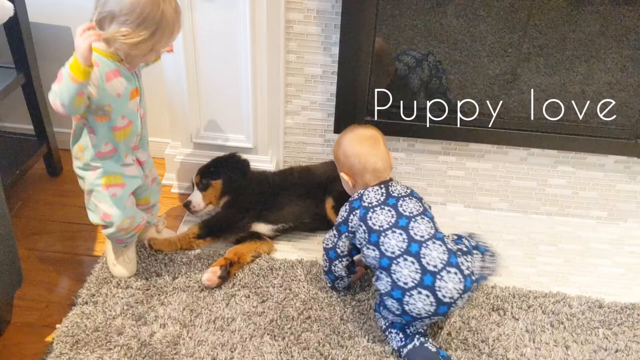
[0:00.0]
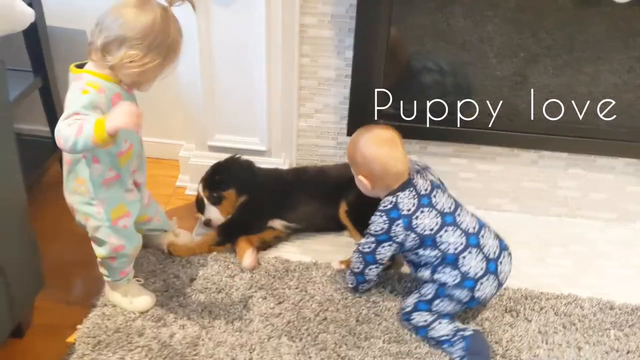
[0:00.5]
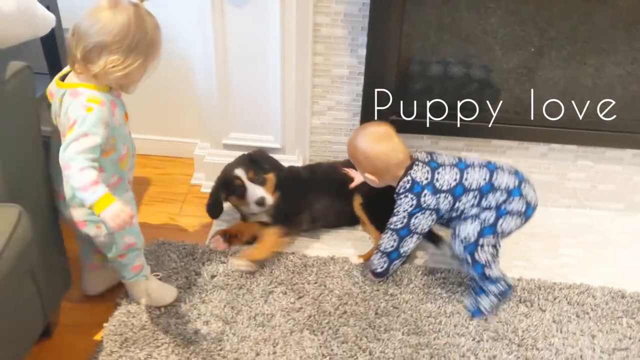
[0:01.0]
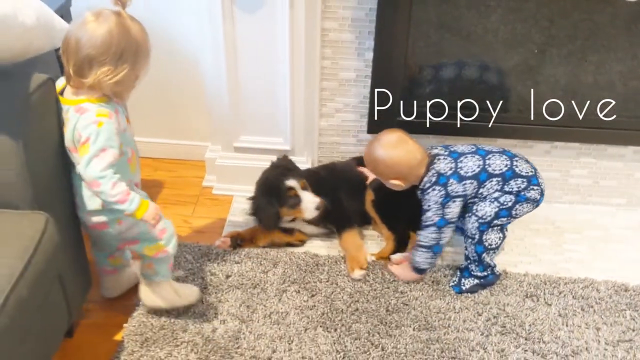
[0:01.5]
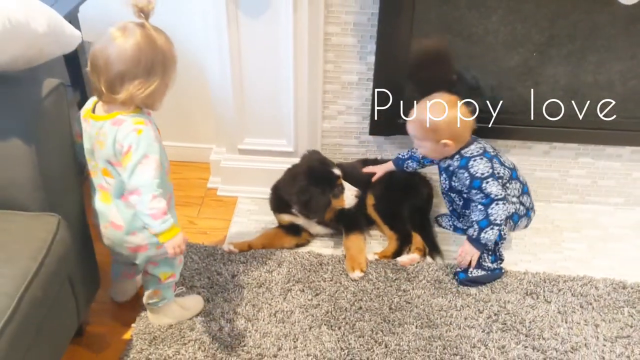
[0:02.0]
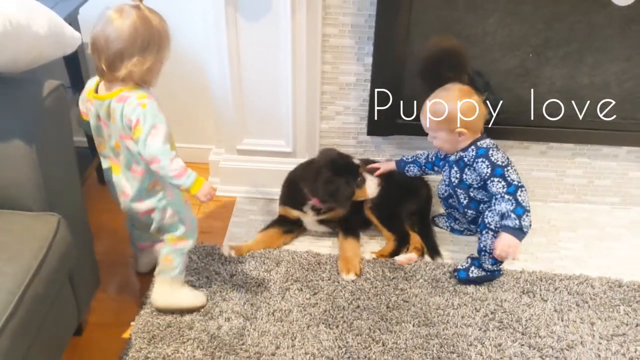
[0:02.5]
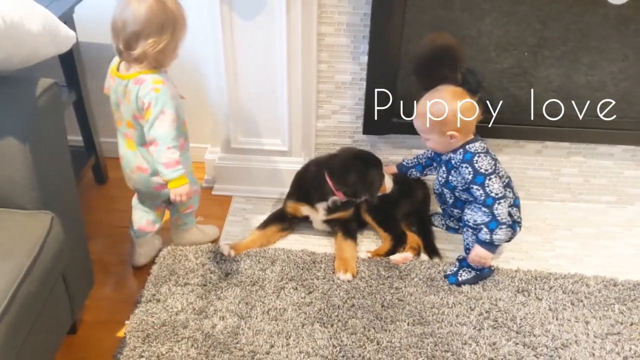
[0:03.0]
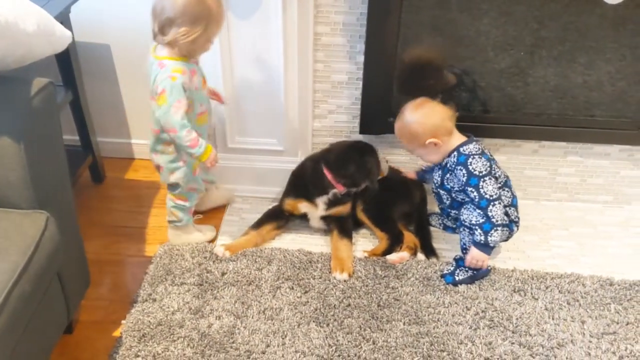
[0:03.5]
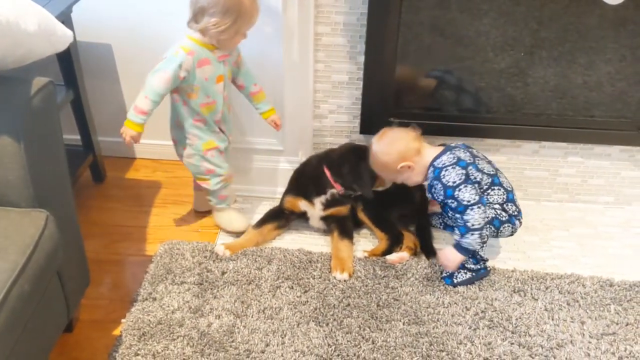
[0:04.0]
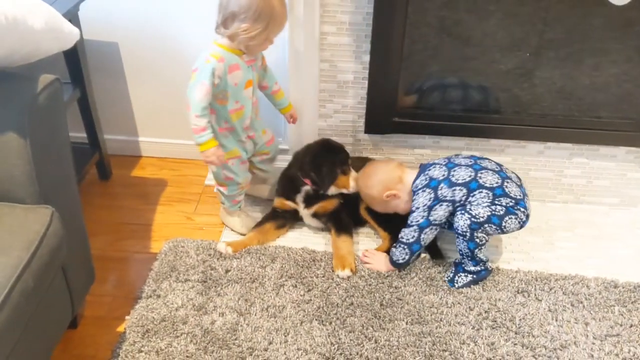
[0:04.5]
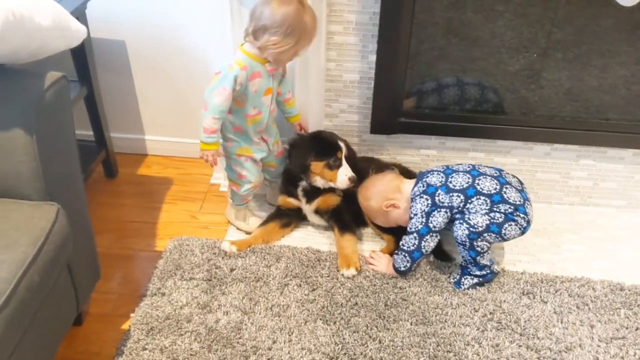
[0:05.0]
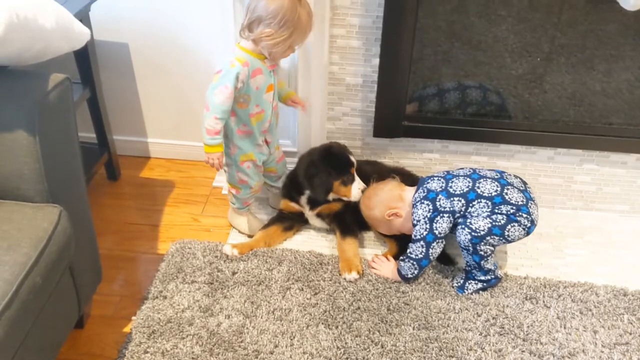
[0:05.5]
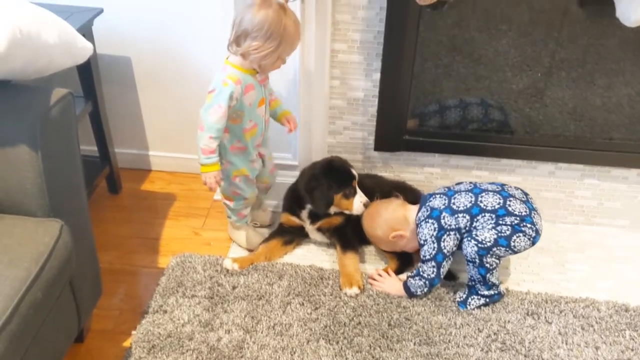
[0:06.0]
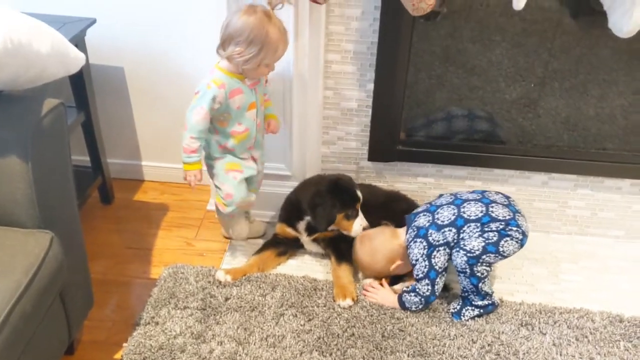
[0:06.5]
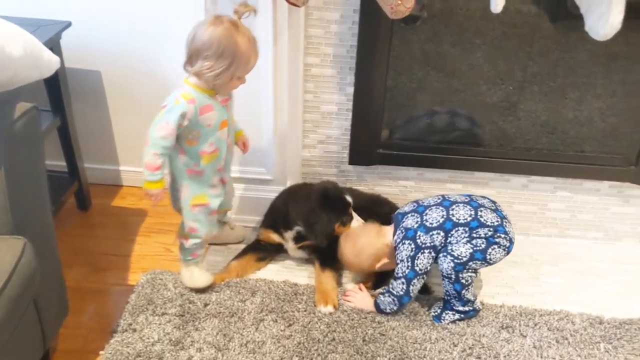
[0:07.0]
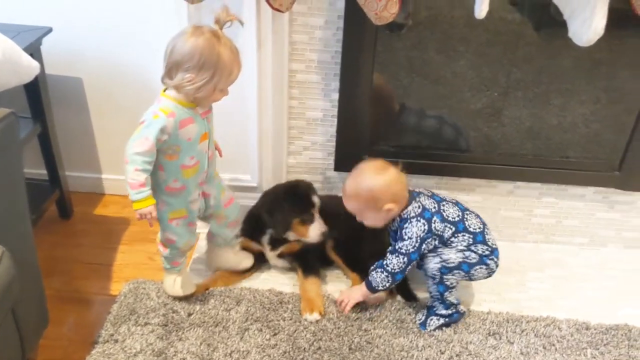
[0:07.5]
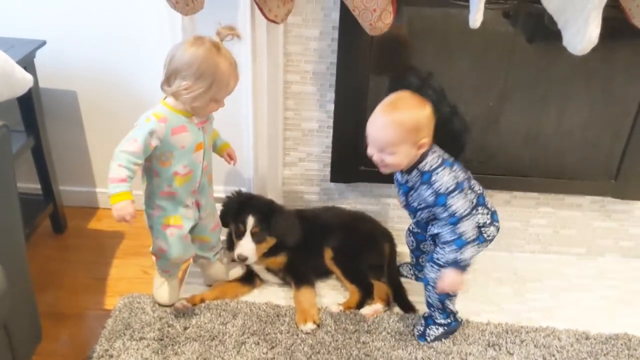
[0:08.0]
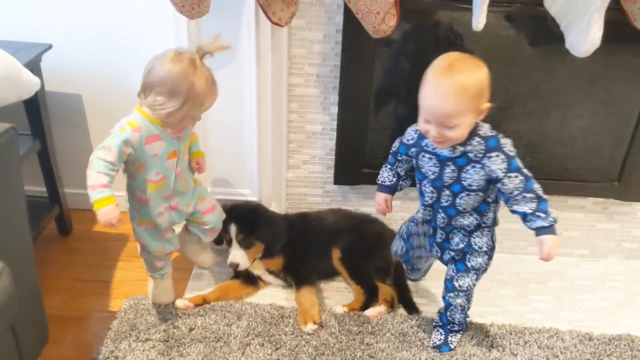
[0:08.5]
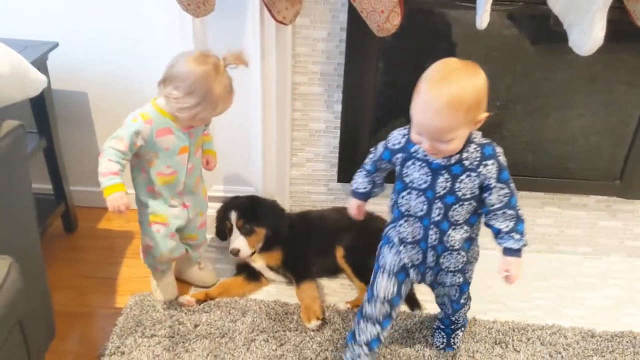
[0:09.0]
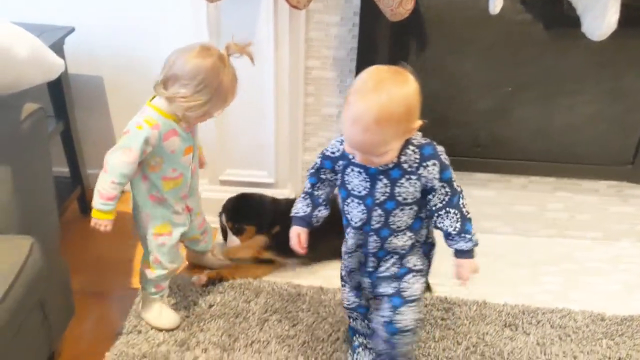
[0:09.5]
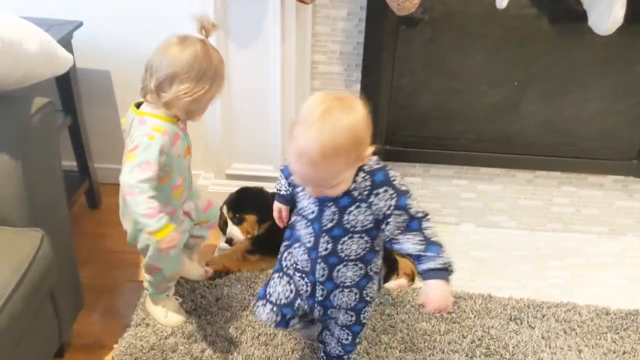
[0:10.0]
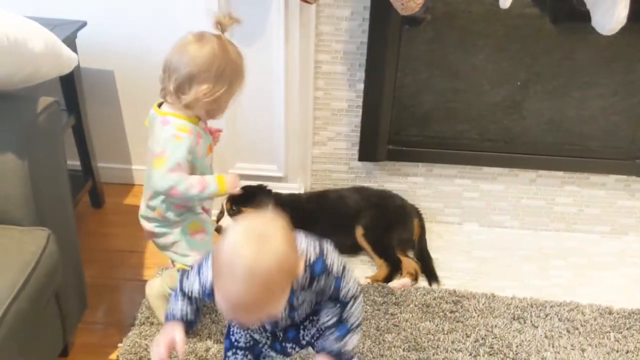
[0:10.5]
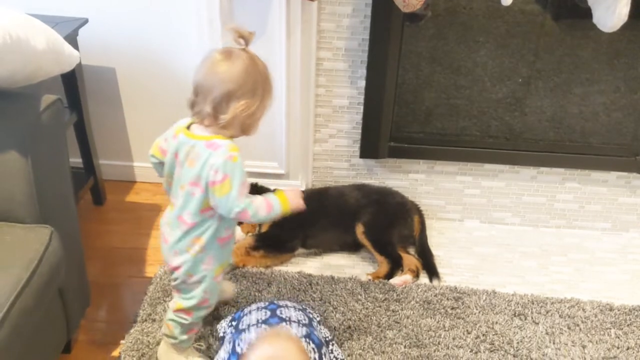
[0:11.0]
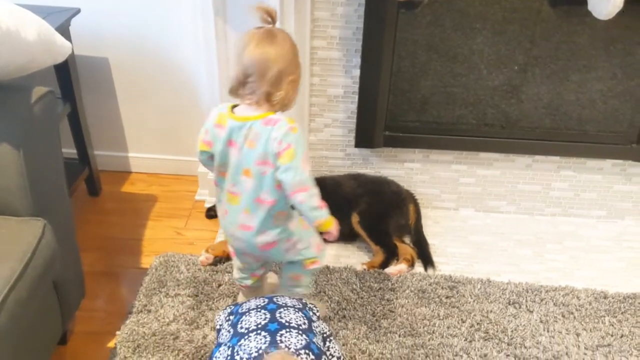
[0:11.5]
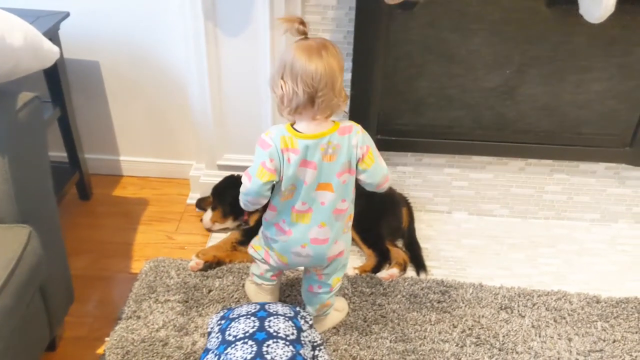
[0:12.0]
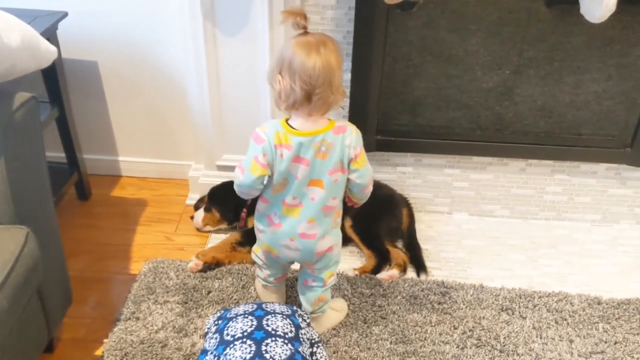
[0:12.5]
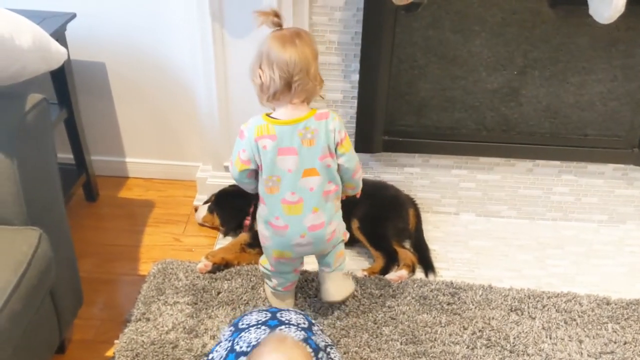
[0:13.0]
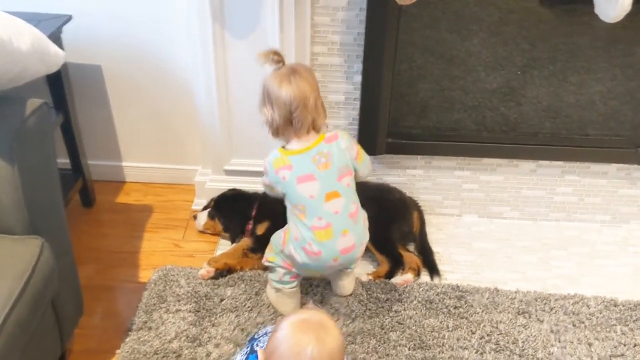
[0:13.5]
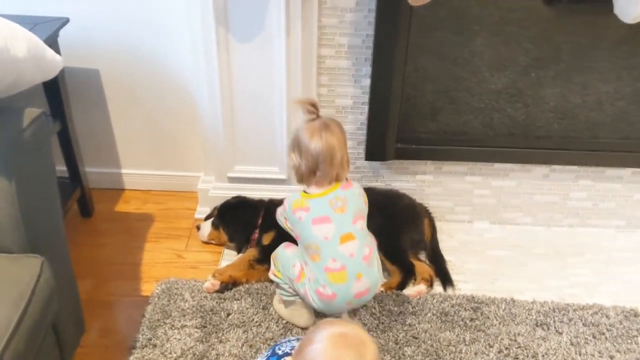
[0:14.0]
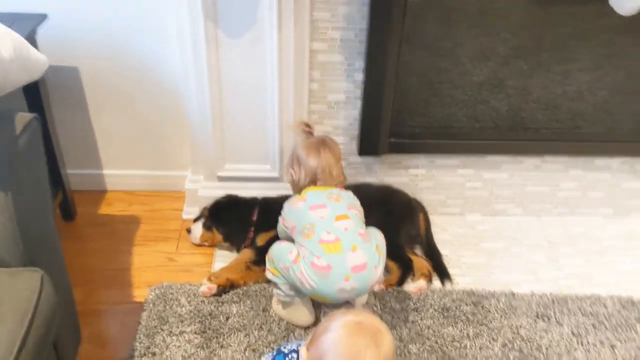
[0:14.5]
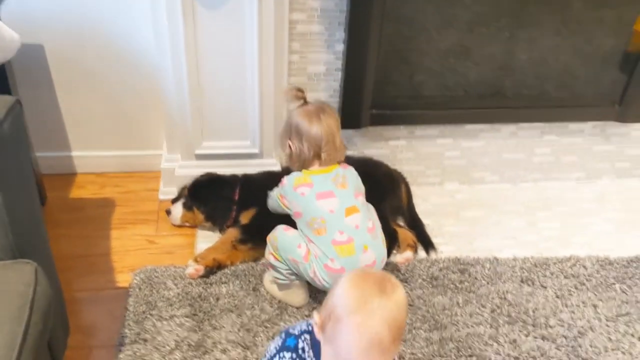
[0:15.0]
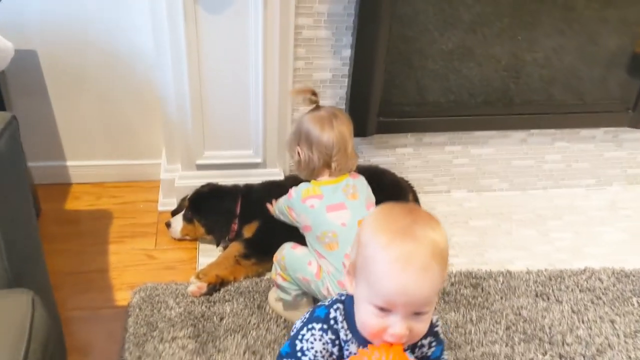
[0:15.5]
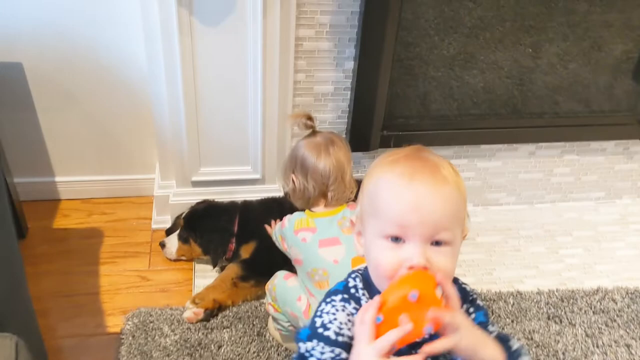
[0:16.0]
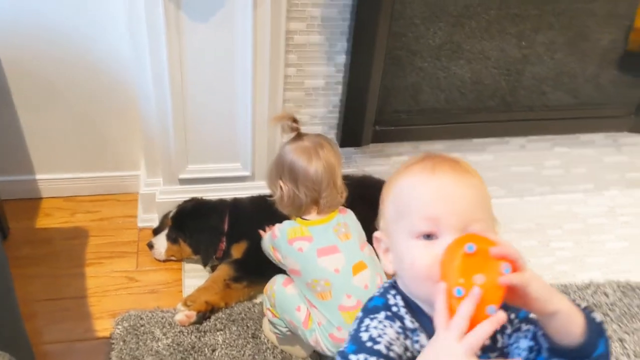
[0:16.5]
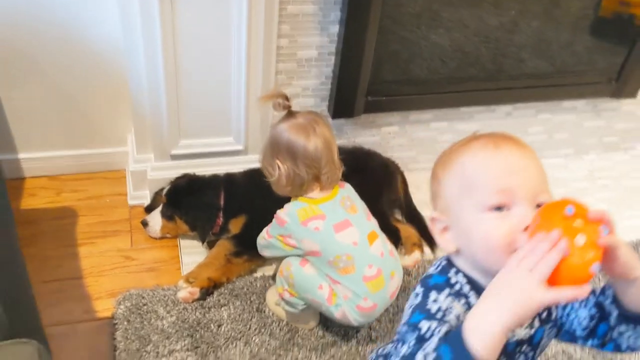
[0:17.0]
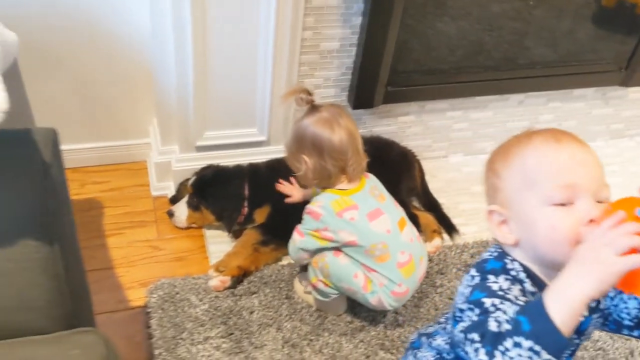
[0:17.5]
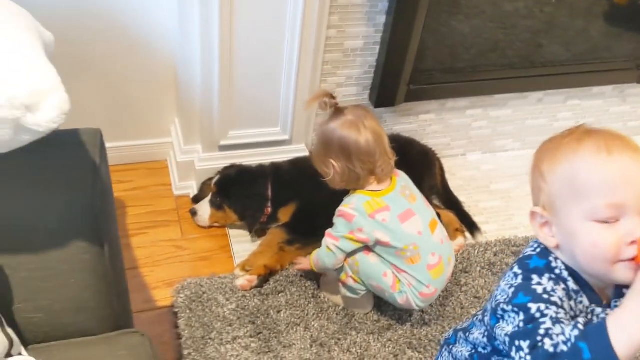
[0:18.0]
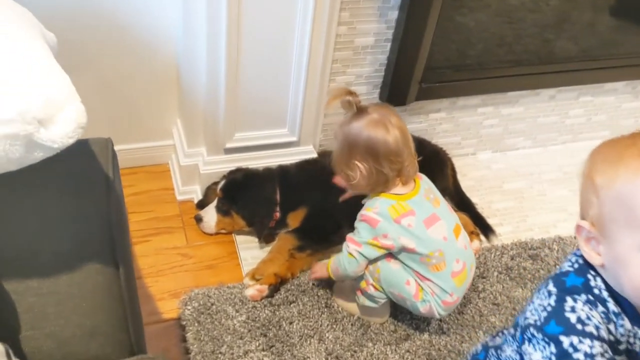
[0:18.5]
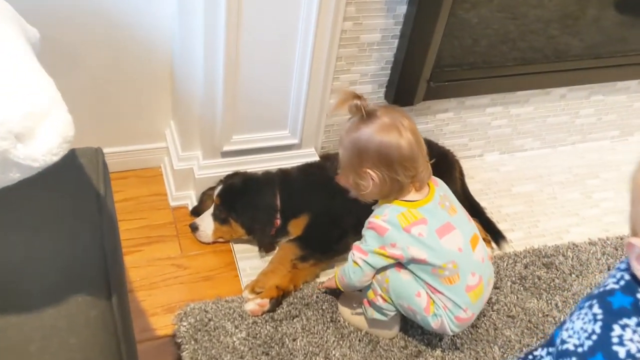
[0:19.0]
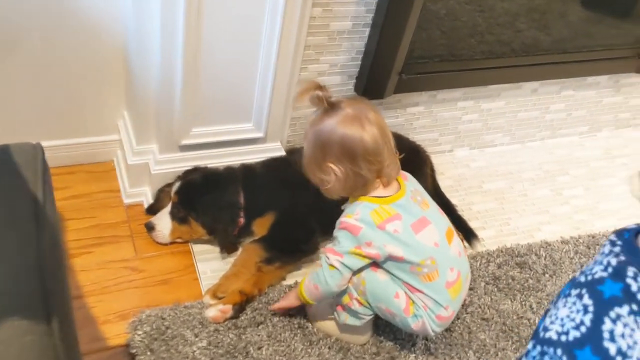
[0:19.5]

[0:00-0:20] The video opens on a room where a puppy is with two small children. One child, apparently a little boy, is sitting on the ground wearing what looks like blue-patterned pyjamas. To the left of the puppy a little girl with blonde hair is standing up; her pyjamas are light blue with a yellow pattern, a yellow collar and coloured cuffs. The puppy is lying on a rug in front of a fireplace. Words on the screen say "Puppy love". The puppy moves as the little boy touches its back. It moves its nose towards the child's hand, and the boy puts his hands on the ground with his head near the floor while the dog nuzzles against his head. The little girl stands next to the puppy, still watching. The little boy then gets up, wanders away from the puppy and goes off screen, while the little girl moves towards the puppy and starts stroking its back. The little boy is having a drink out of an orange cup.